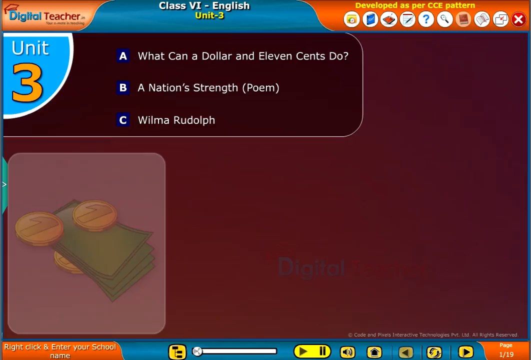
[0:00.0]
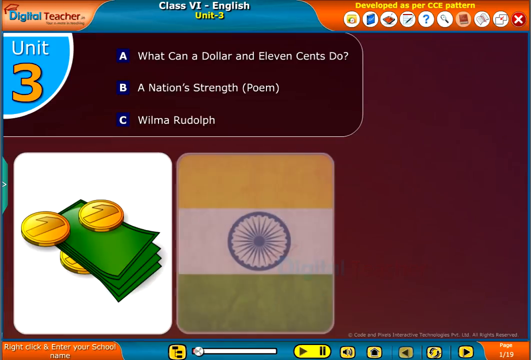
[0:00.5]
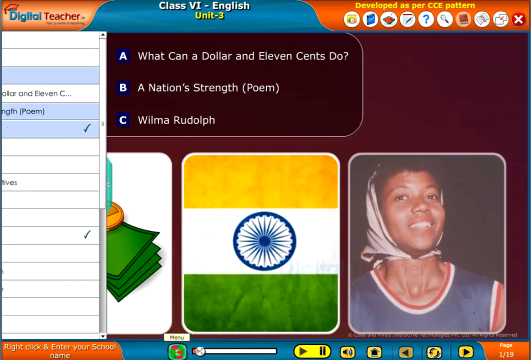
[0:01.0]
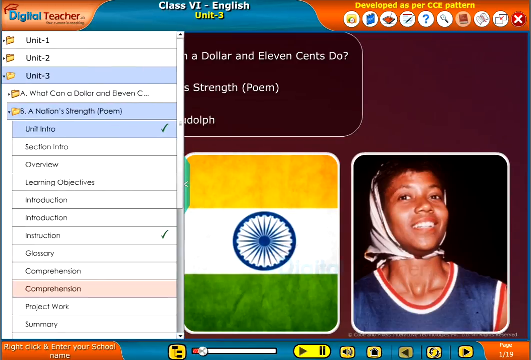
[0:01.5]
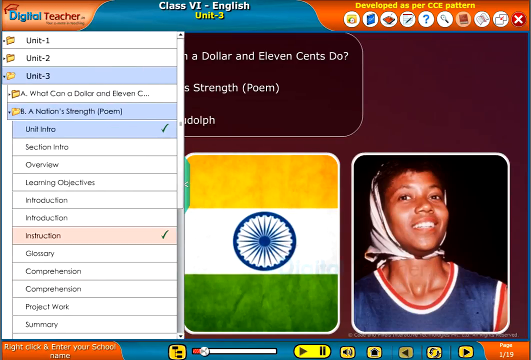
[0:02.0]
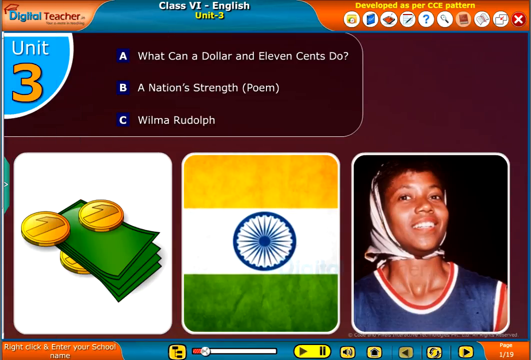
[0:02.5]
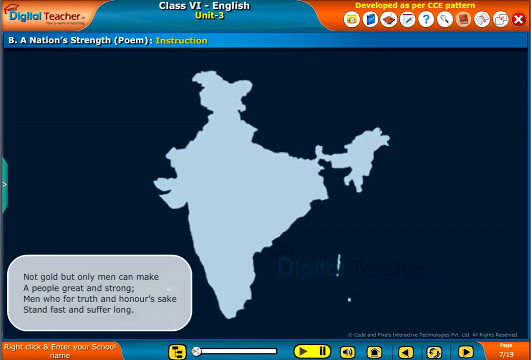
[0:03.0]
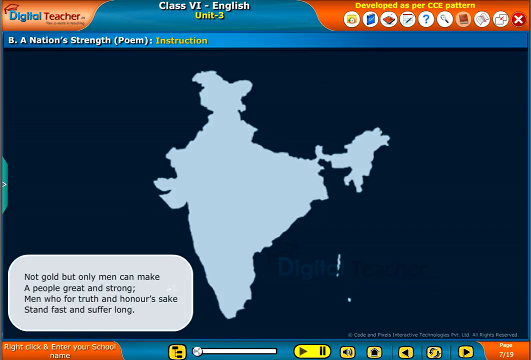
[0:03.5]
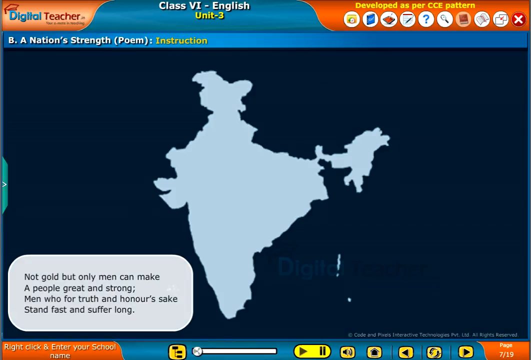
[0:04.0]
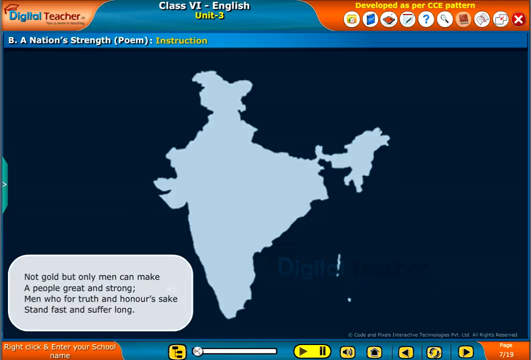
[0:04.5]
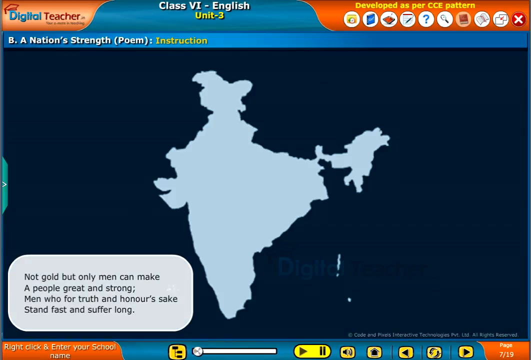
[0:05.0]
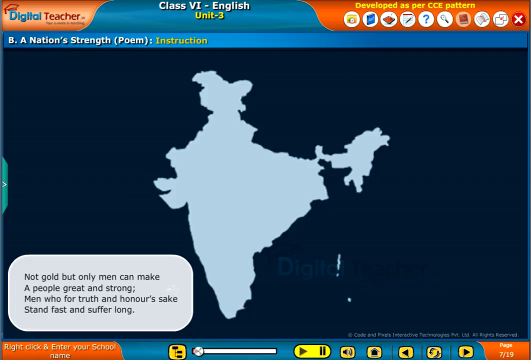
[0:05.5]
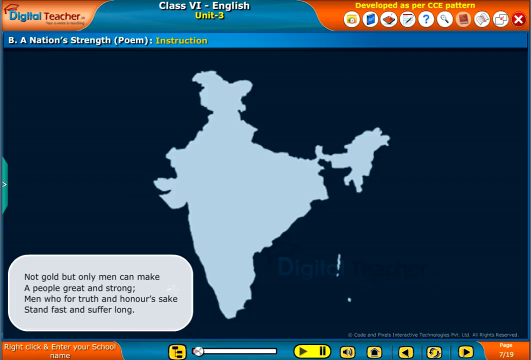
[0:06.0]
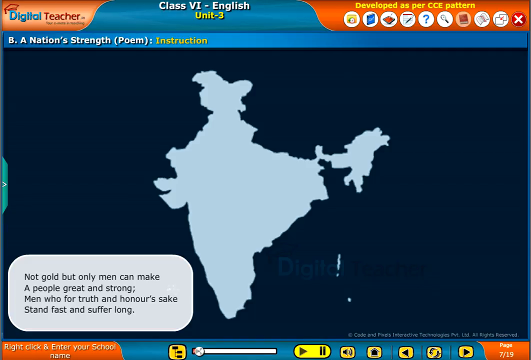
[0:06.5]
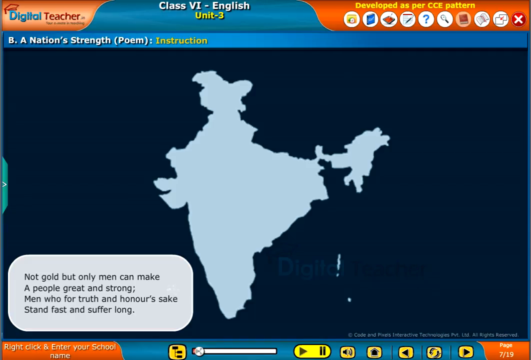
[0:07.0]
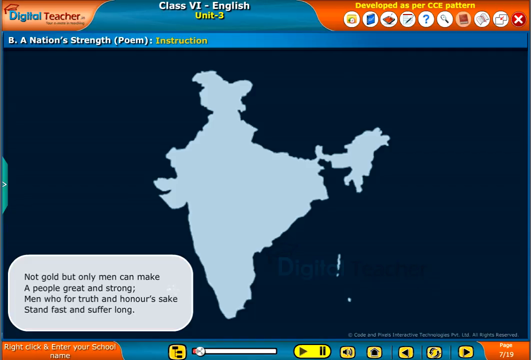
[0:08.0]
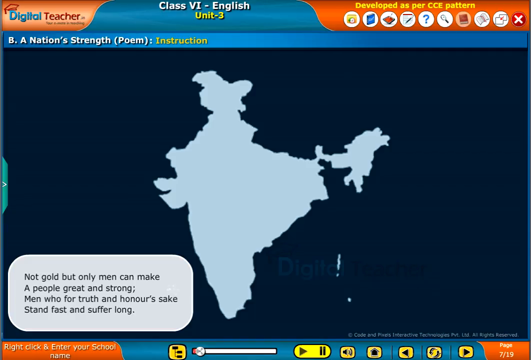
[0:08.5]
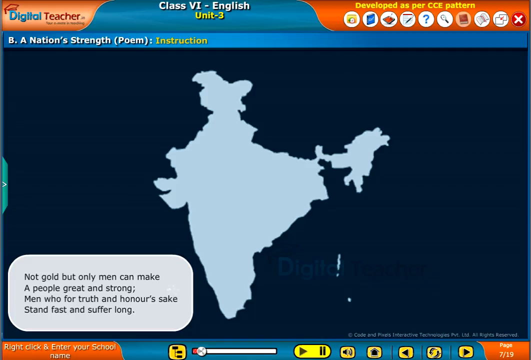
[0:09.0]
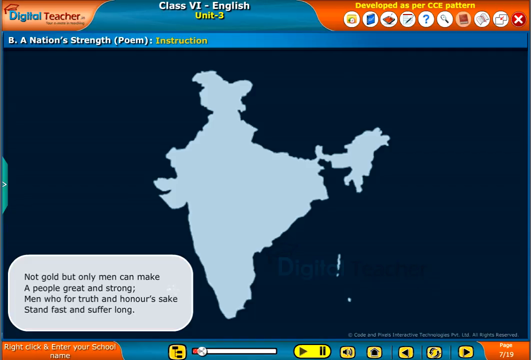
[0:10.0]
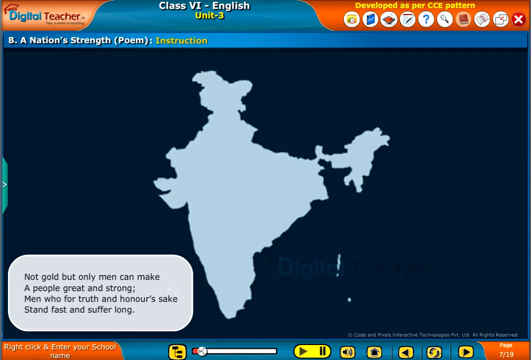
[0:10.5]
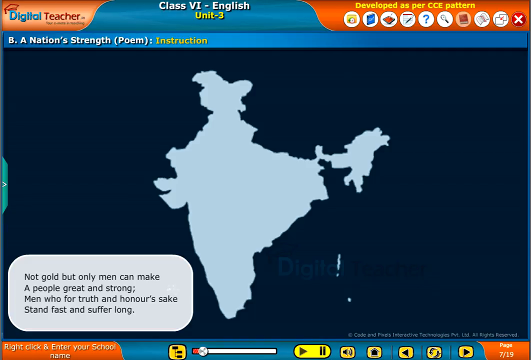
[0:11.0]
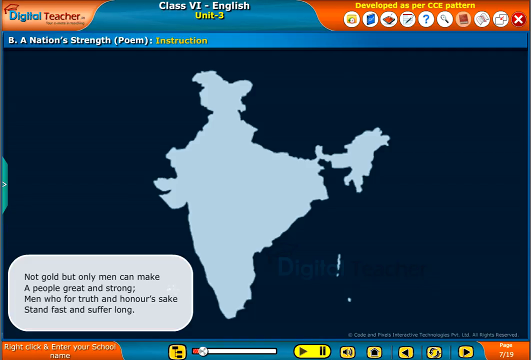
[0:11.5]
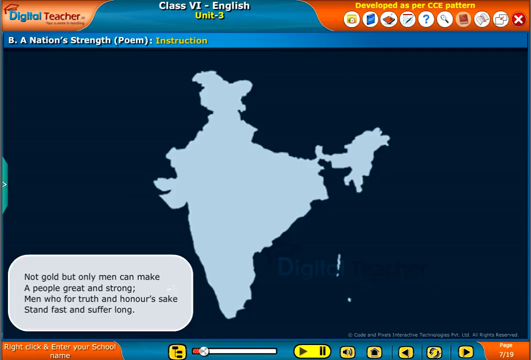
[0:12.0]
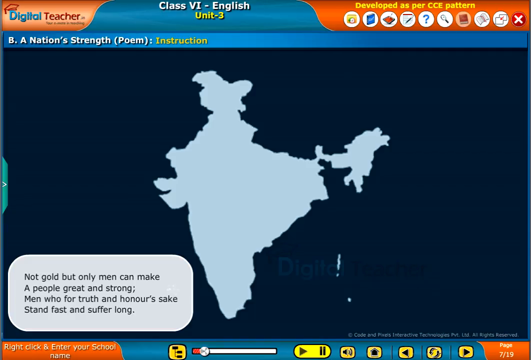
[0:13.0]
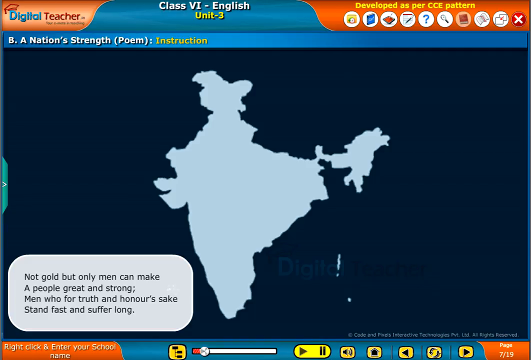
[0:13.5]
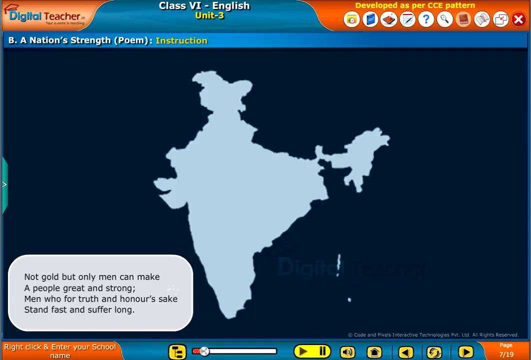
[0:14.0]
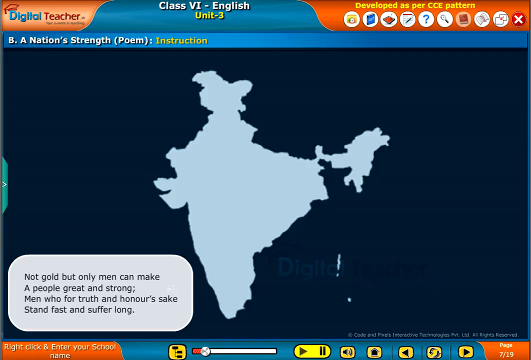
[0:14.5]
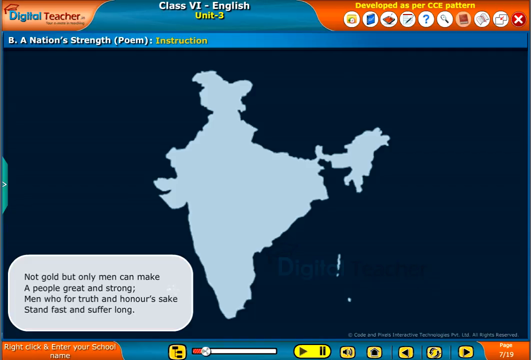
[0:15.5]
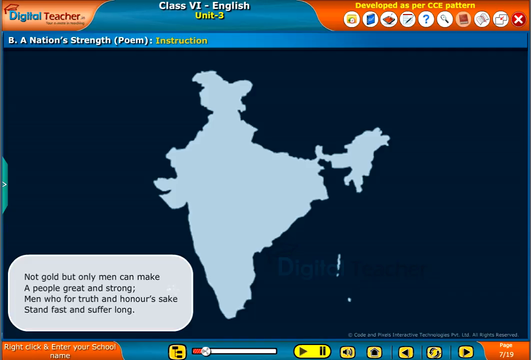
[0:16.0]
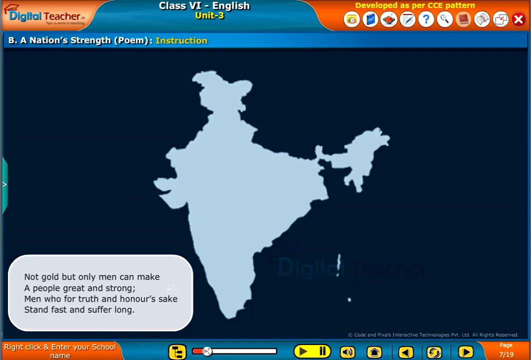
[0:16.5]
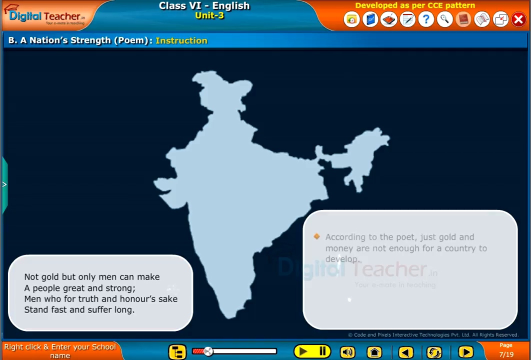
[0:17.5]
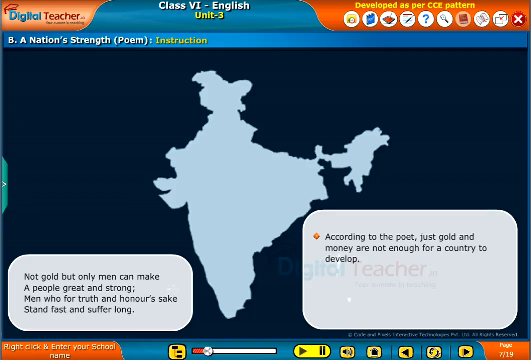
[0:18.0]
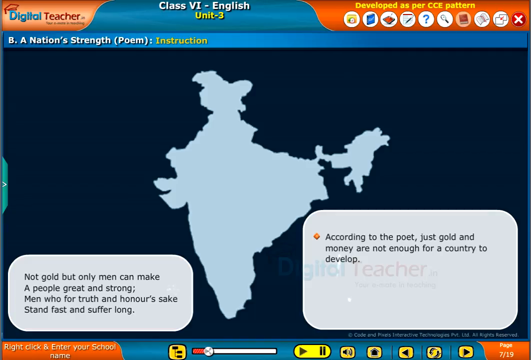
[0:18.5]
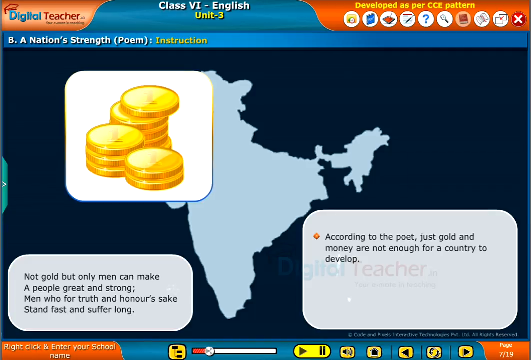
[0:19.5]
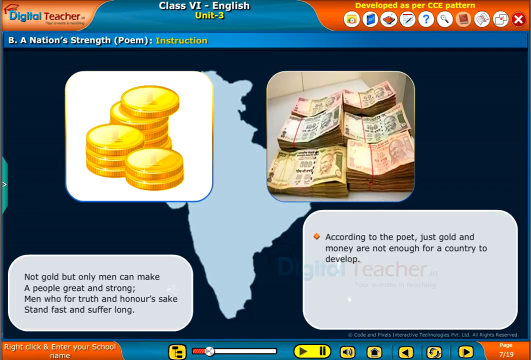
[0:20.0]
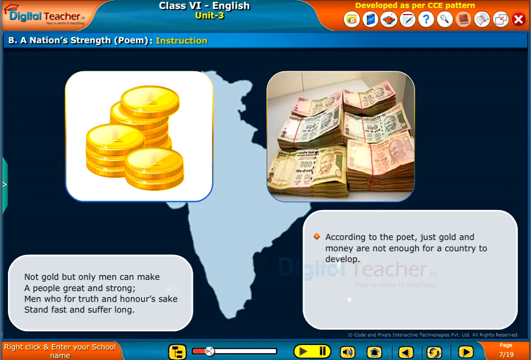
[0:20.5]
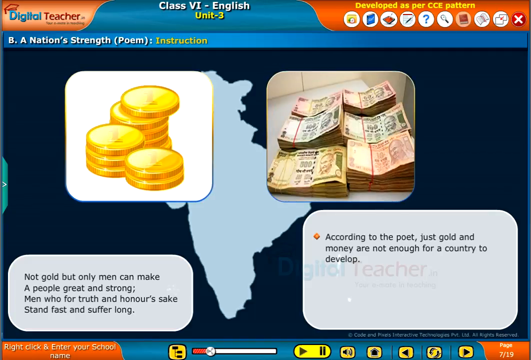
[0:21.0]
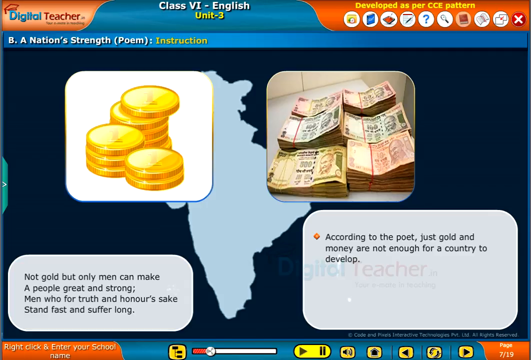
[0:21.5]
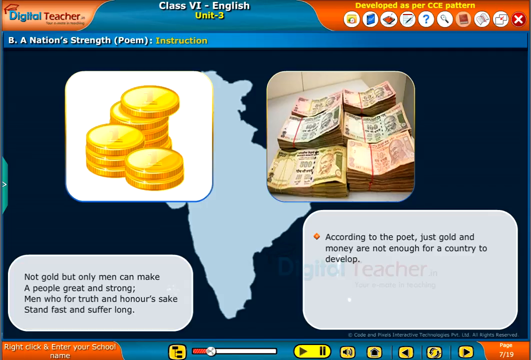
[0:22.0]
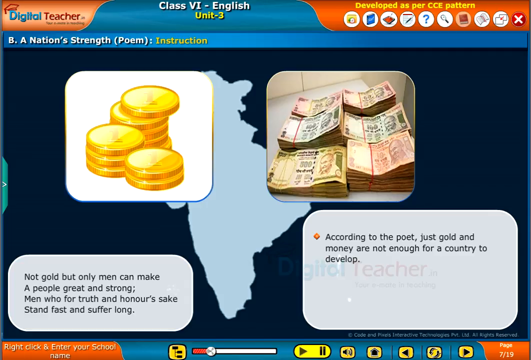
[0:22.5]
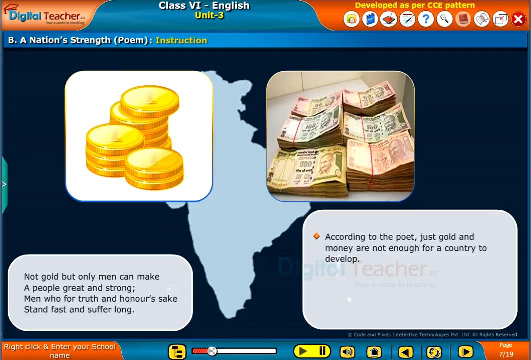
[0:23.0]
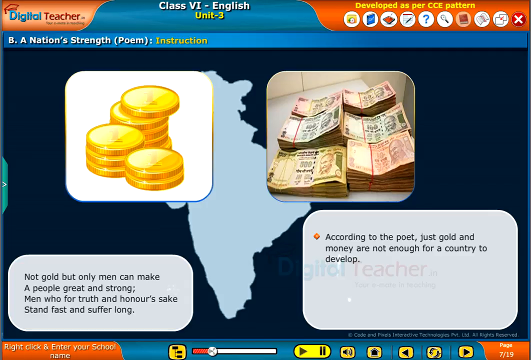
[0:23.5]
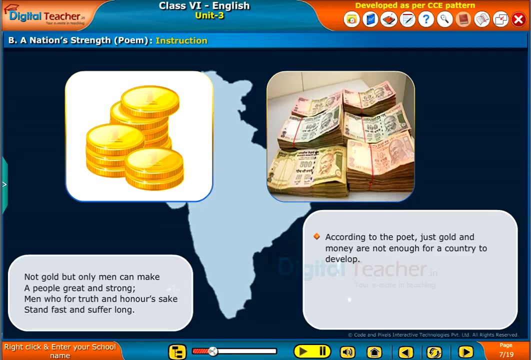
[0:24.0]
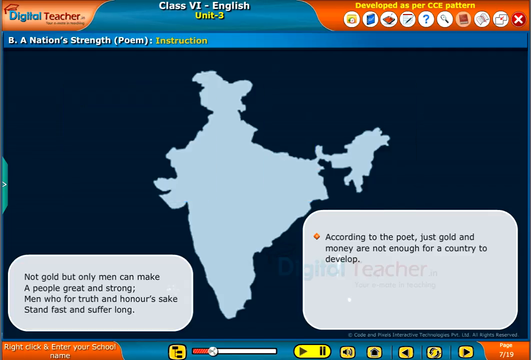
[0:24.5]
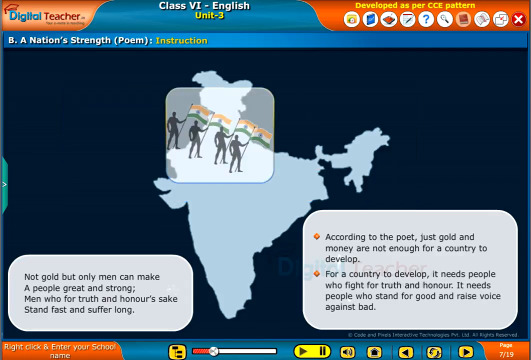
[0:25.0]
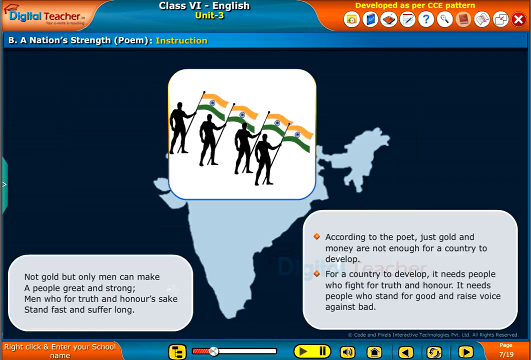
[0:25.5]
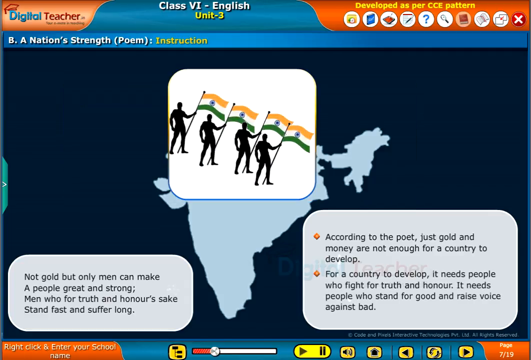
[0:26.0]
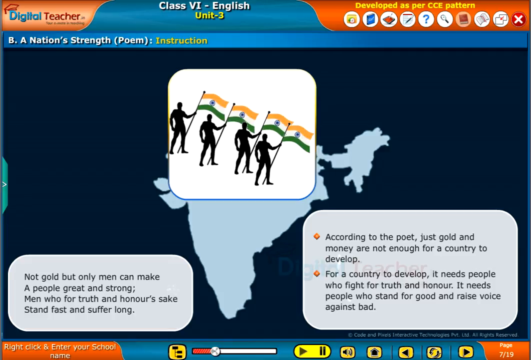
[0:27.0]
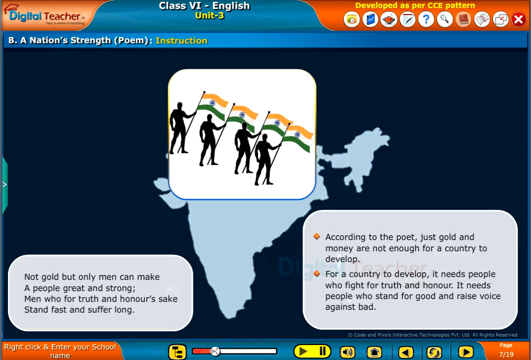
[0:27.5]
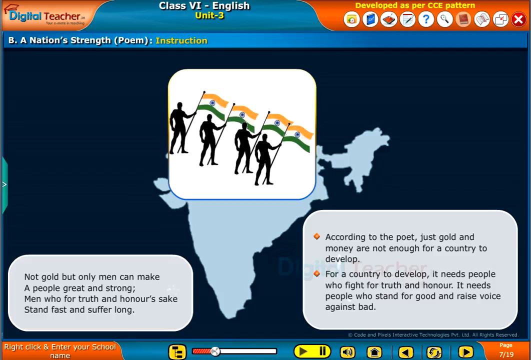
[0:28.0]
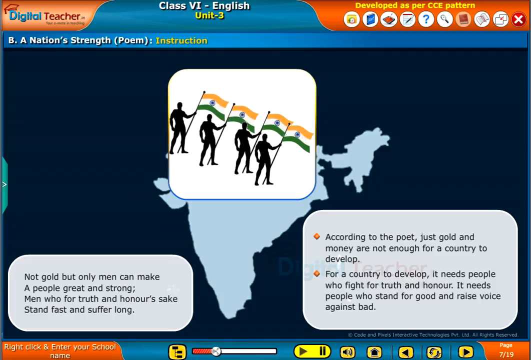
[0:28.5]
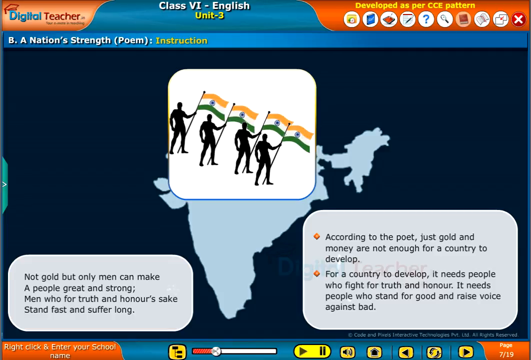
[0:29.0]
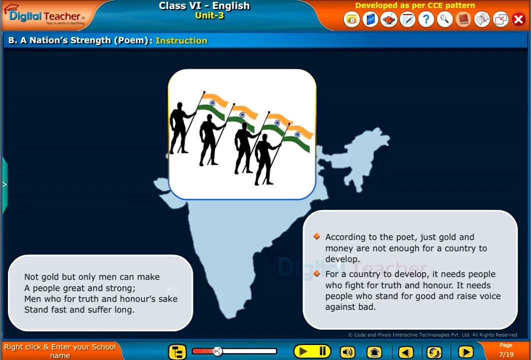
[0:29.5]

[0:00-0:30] An application screen shows animated instruction for an English class. The screen background is a deep burgundy color. Across the top runs a horizontal frame in red and green; on the green portion in the middle, white text reads "Class VI - English unit 3". "Unit 3" is also written on the upper left side below the horizontal frame. In the middle of the screen, just below the frame, are three options labeled A, B and C. Option A says "what can a dollar and 11 cents do?", B says "a nation's strength (Poem)", and C says "Wilma Rudolph". Next, a window pops up on the left and a menu option is selected. The screen then transitions to a map of India in a pale blue color against a dark screen. Pop-up text at the lower left reads "not gold but only men can make a people great and strong. Men who for truth and honor's sake stand fast and suffer long." This stays for a few seconds until two images pop up: on the left a stack of gold coins, and on the right a stack of bills that look like Indian currency.